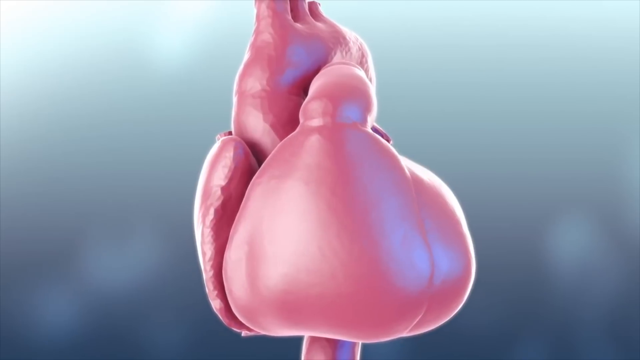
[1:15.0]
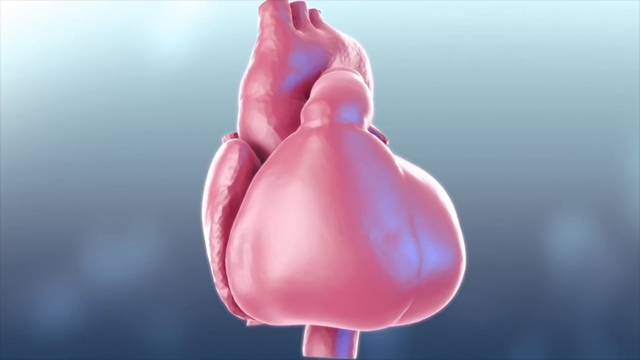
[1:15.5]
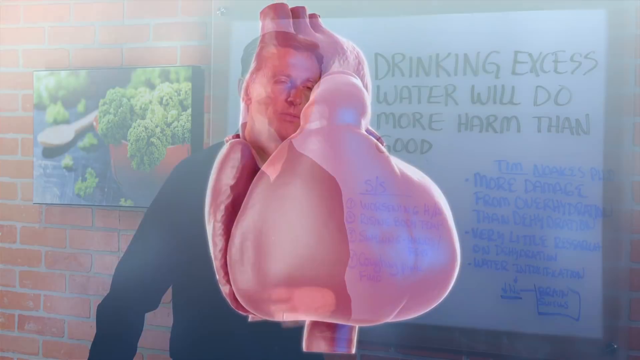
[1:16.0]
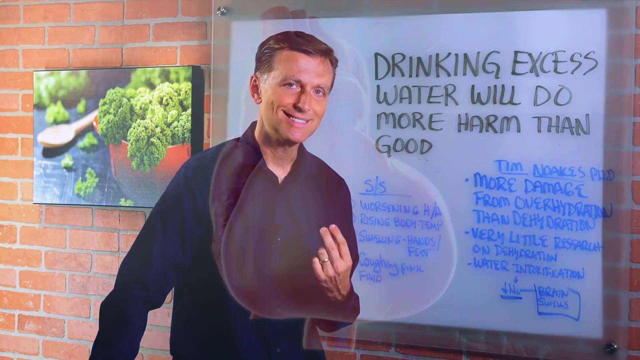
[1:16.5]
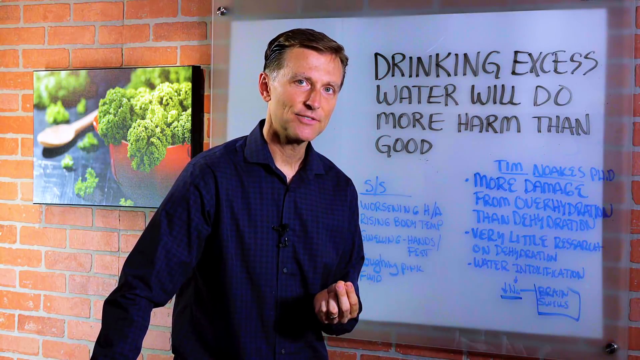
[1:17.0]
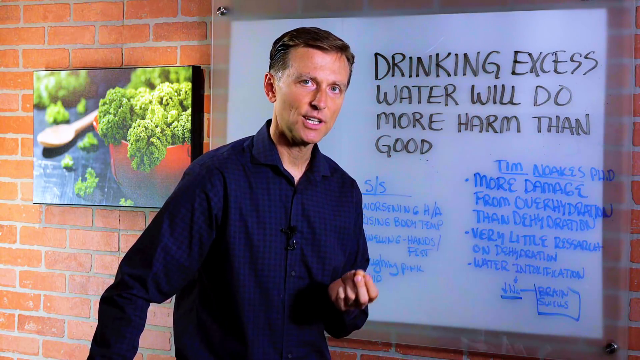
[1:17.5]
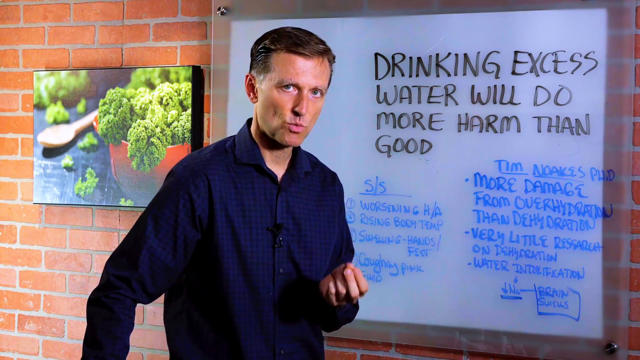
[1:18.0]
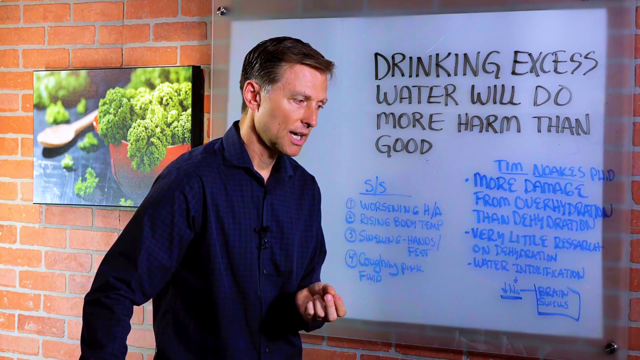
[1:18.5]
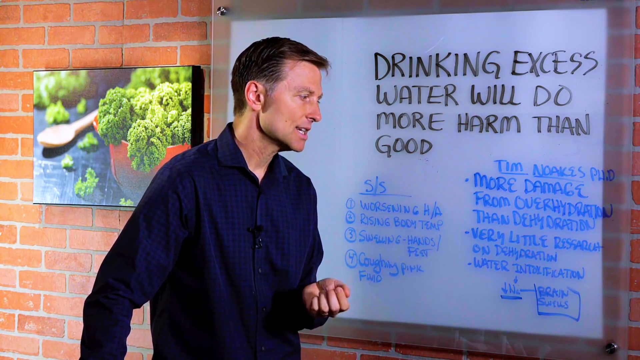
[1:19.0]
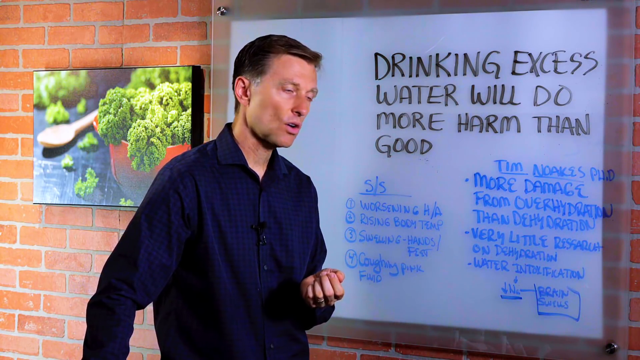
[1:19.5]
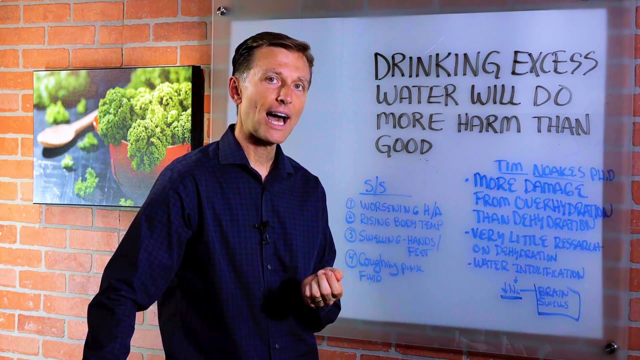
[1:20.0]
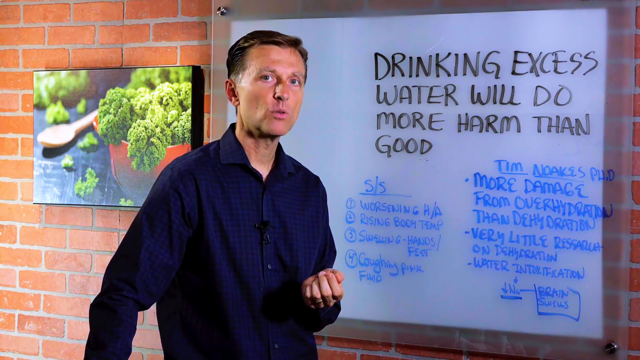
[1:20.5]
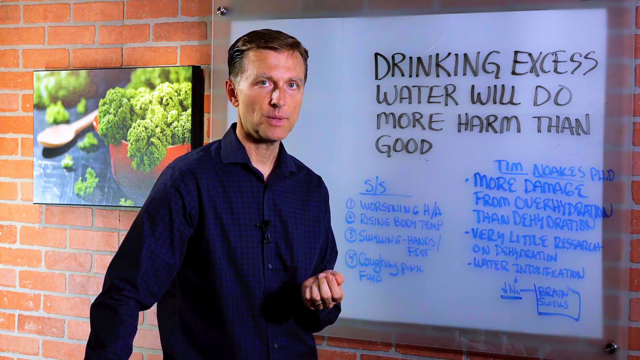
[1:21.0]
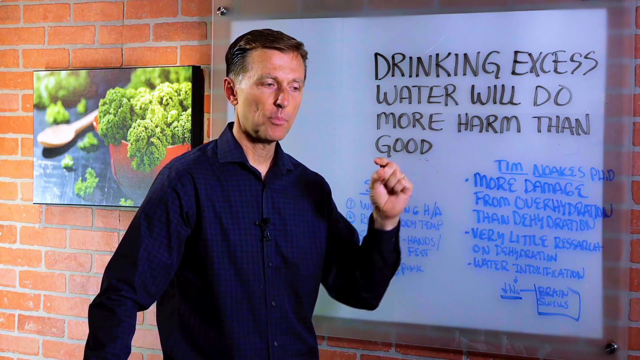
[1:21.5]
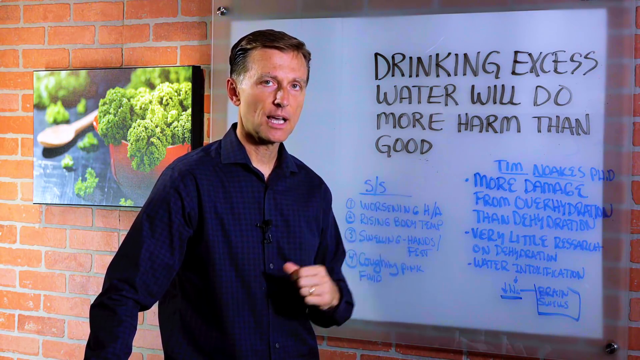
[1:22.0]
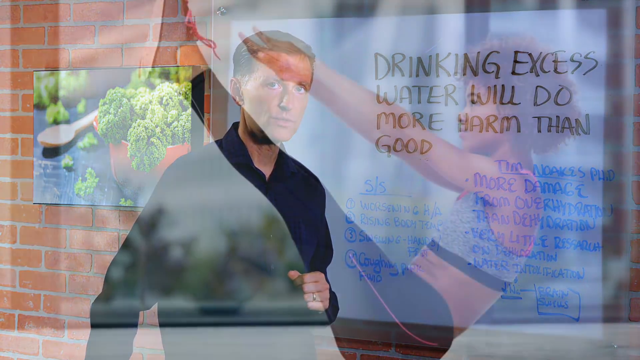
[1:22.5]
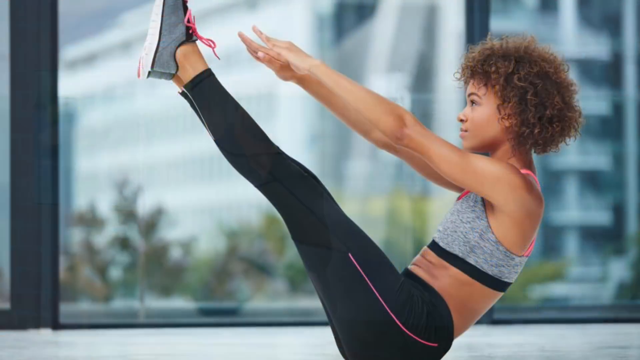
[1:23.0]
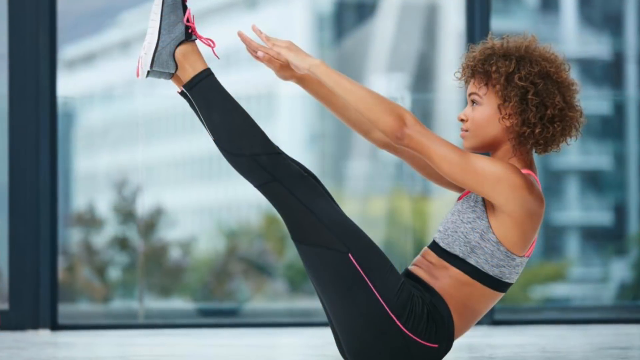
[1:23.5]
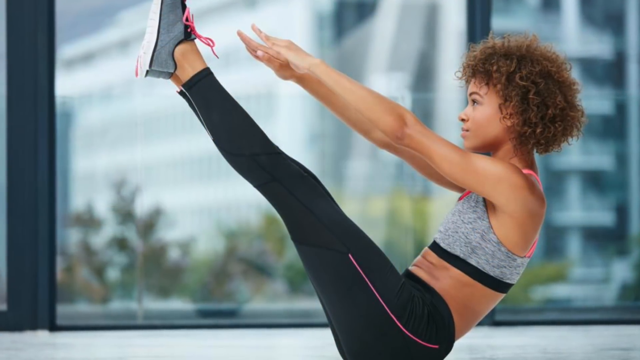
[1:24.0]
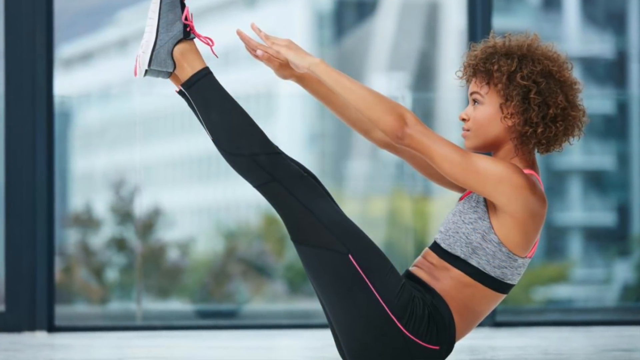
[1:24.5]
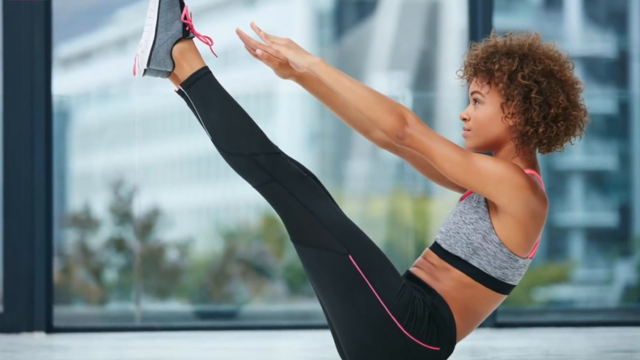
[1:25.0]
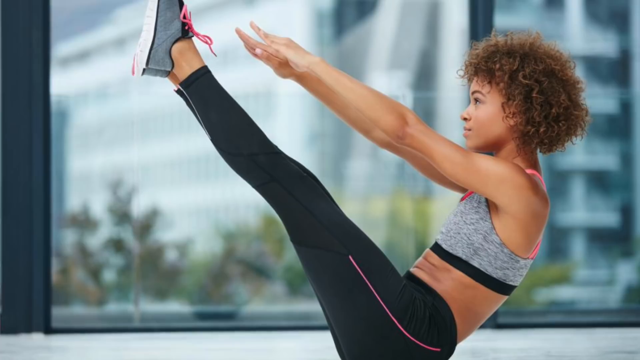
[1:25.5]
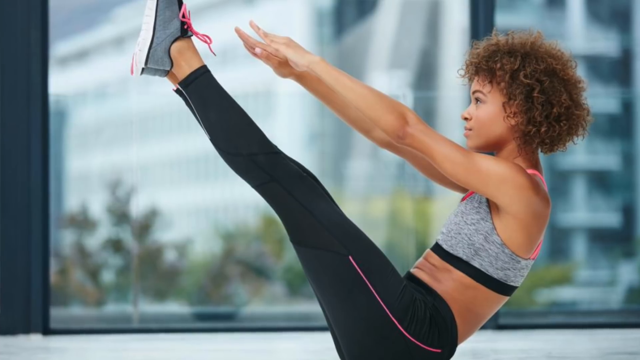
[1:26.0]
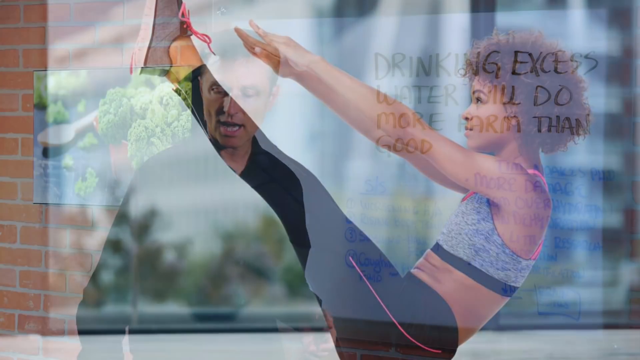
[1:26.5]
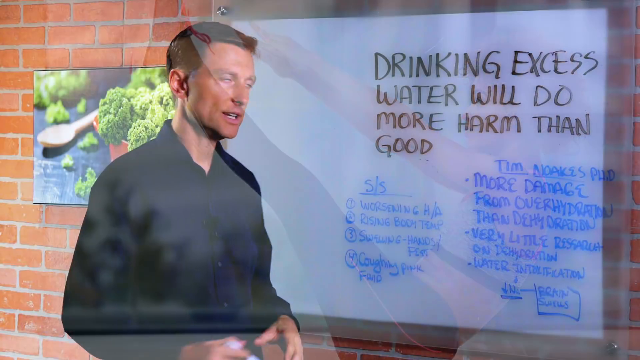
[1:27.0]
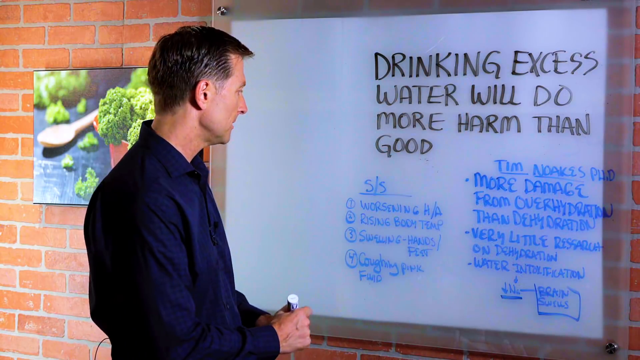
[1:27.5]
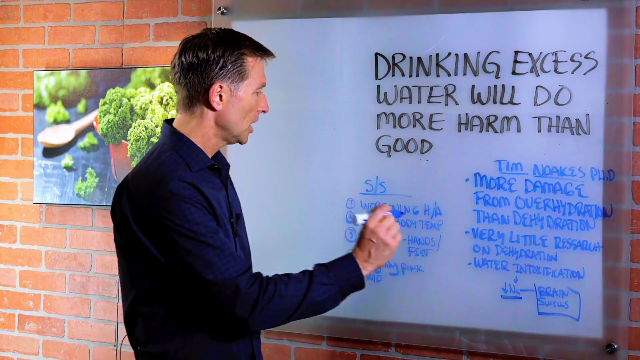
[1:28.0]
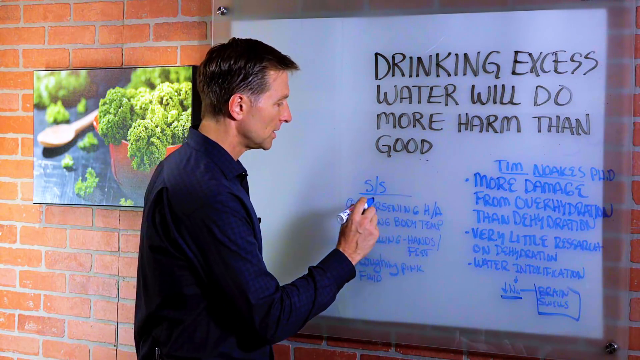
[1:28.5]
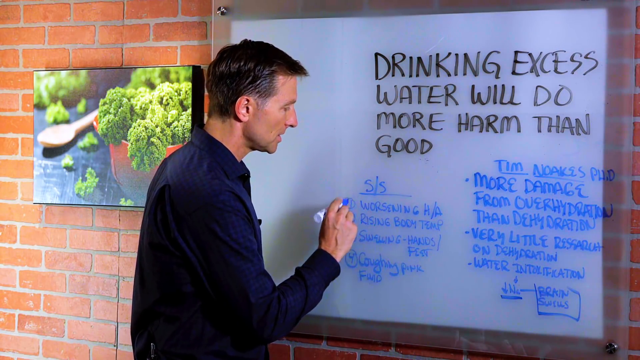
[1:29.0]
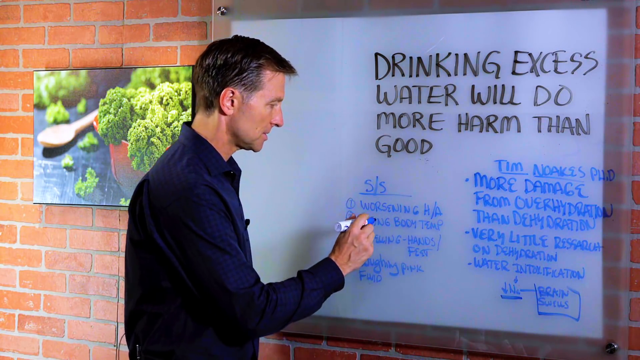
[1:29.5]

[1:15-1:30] The graphic of what looks to be a human heart continues: a large, light pink, thick, healthy-looking heart that moves and beats. The video goes back to the man, who talks about more of the whiteboard while using his hands. It then switches to an image of what looks like a young woman, who looks black and appears to be in her early 20s, with curly light brown hair falling just below her chin. She wears a gray sports bra, black yoga pants with a pink strip down the side, just halfway down to the thigh, and gray shoes. She sits on her butt in a yoga pose, balancing with her legs straight and elevated in the air and her arms straight in front of her, reaching for her toes. She appears to be in a gym, with a window behind her showing high-rise buildings outside. The video returns to the man at the whiteboard, who picks up a blue Sharpie and goes to the left column labeled "S/S," as if to write or add something to the board.